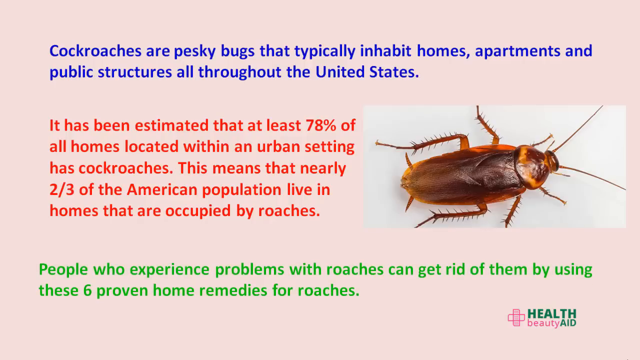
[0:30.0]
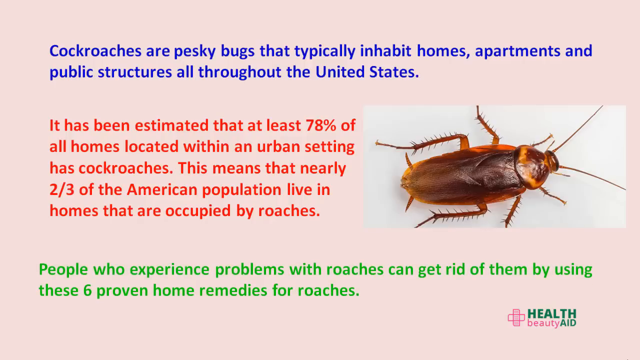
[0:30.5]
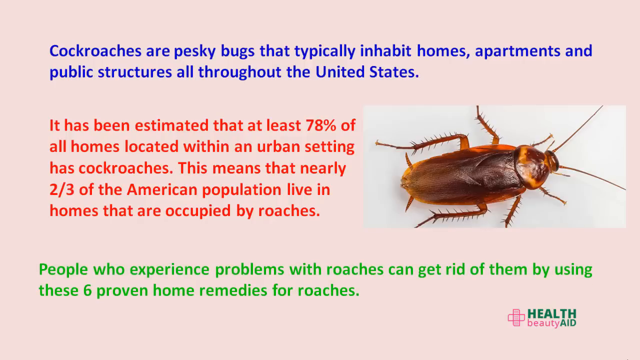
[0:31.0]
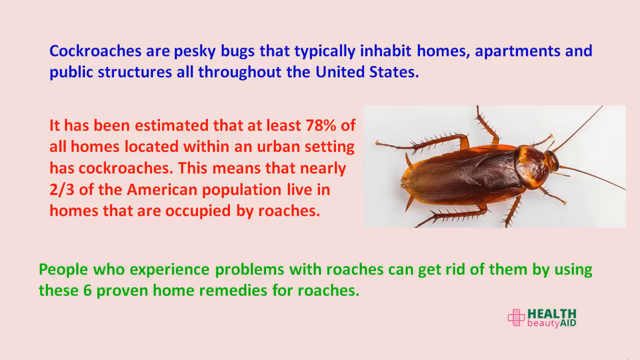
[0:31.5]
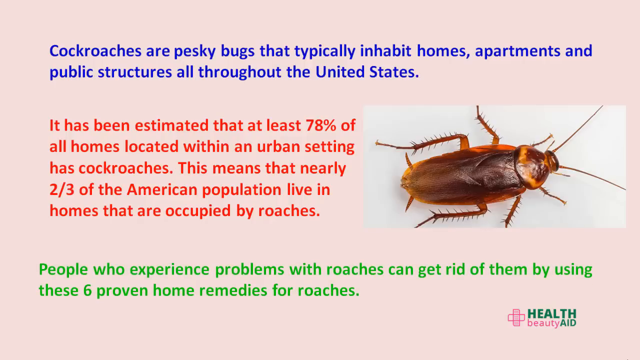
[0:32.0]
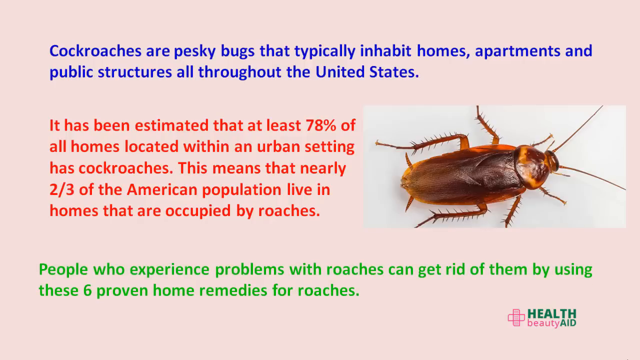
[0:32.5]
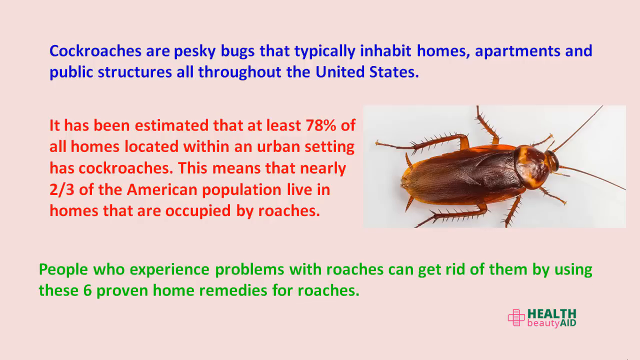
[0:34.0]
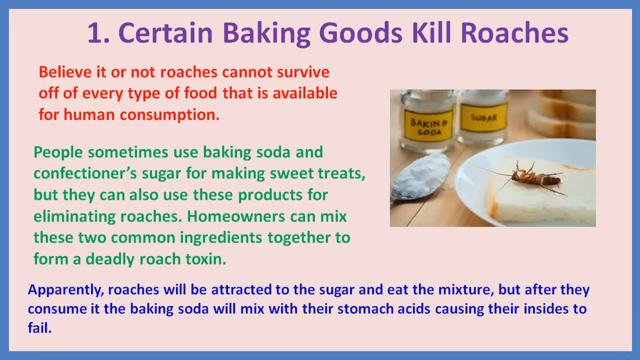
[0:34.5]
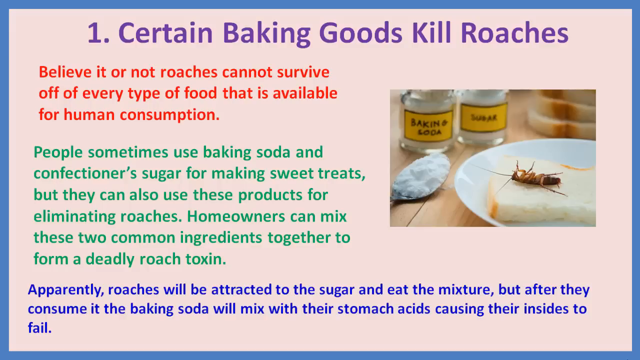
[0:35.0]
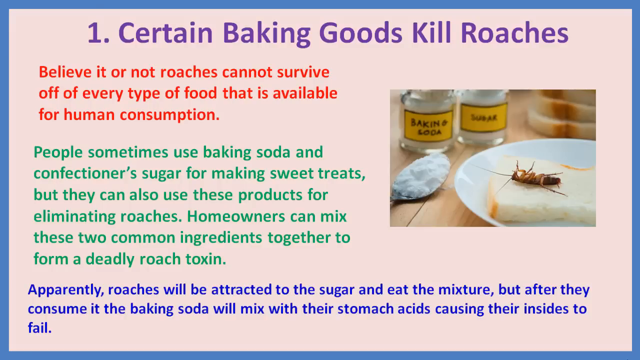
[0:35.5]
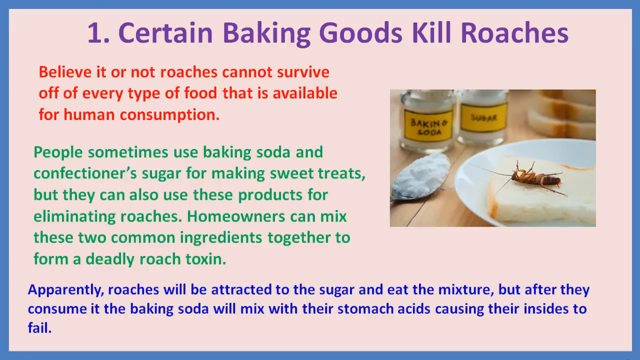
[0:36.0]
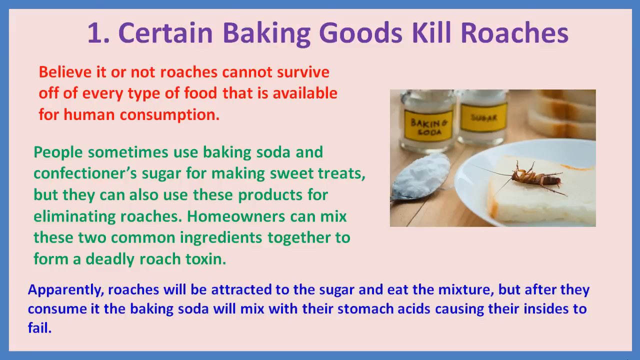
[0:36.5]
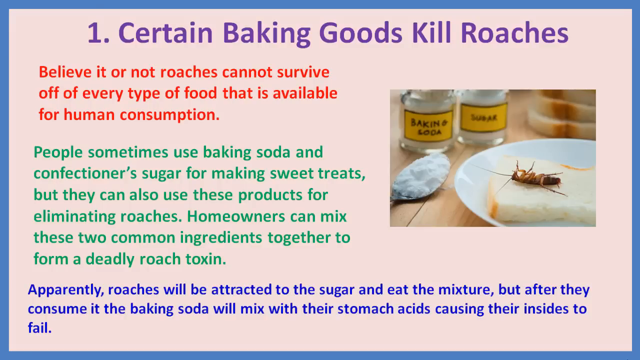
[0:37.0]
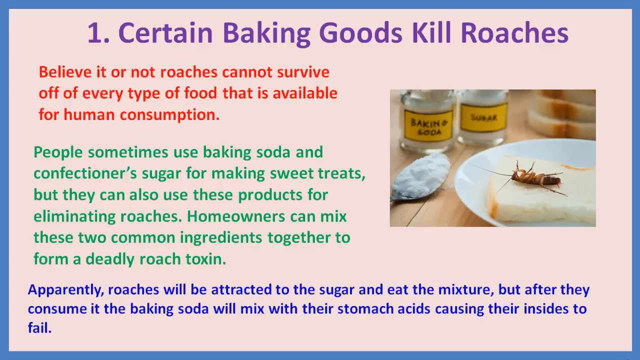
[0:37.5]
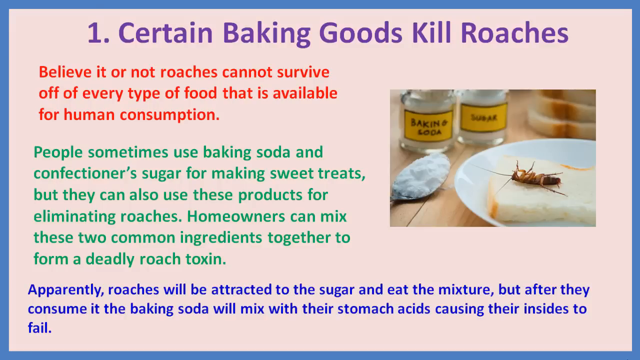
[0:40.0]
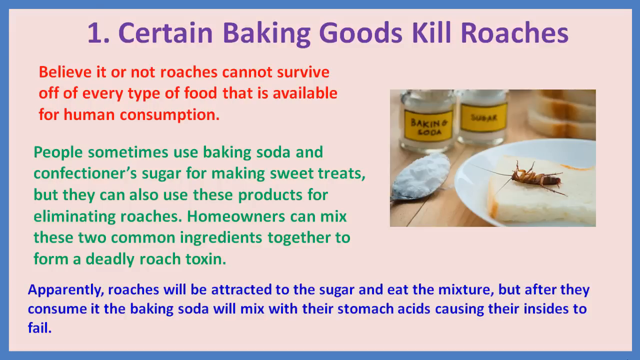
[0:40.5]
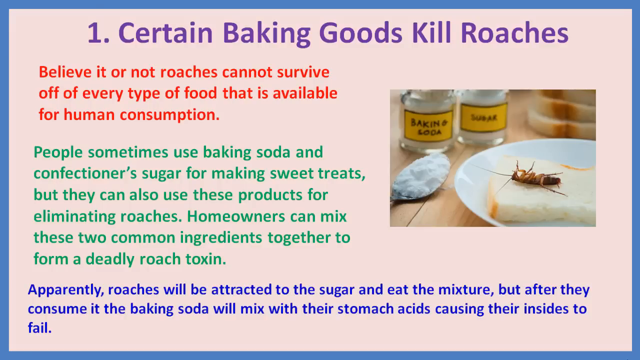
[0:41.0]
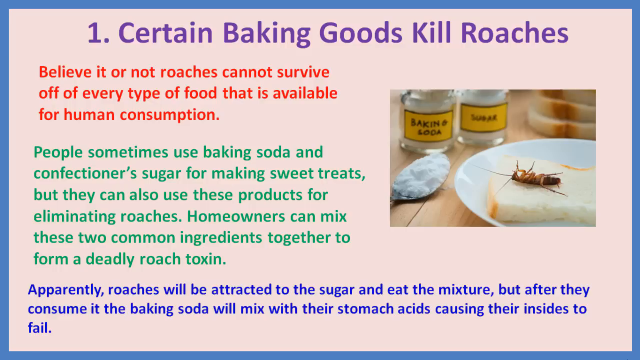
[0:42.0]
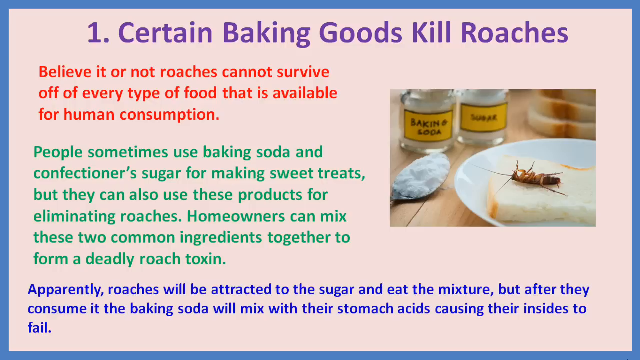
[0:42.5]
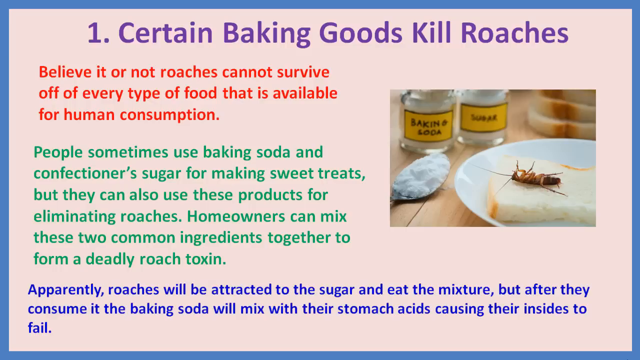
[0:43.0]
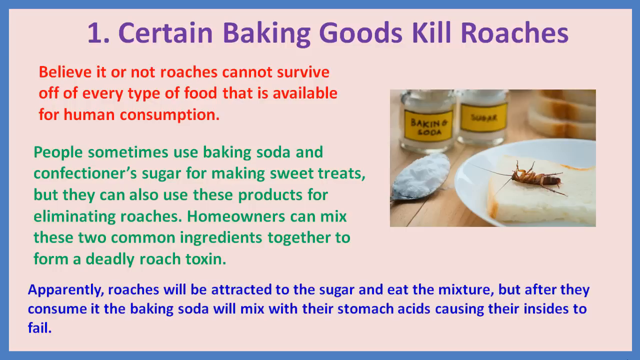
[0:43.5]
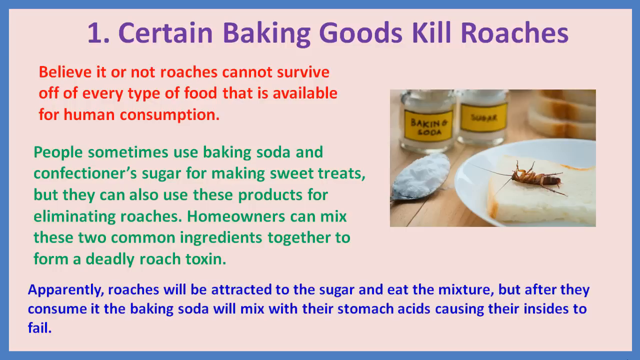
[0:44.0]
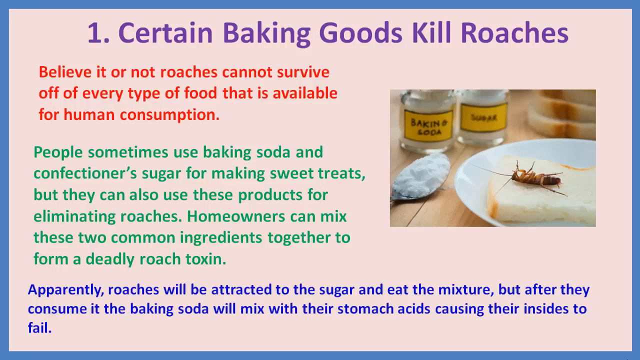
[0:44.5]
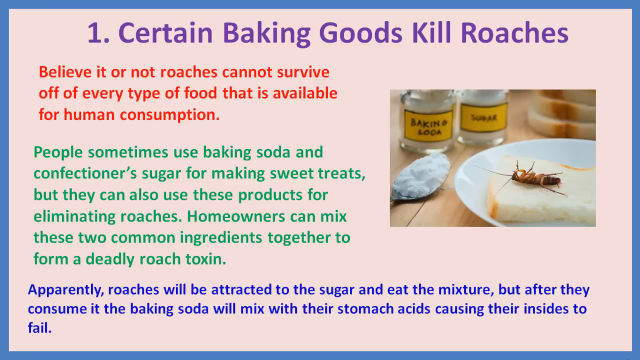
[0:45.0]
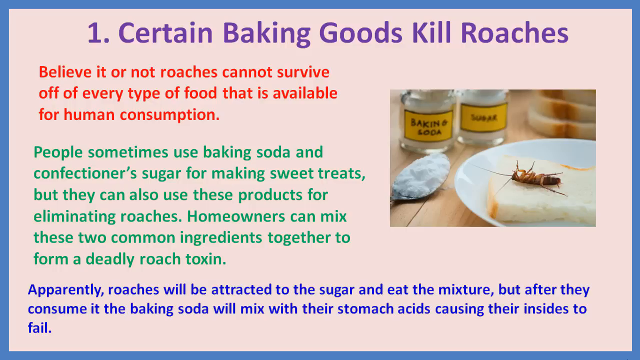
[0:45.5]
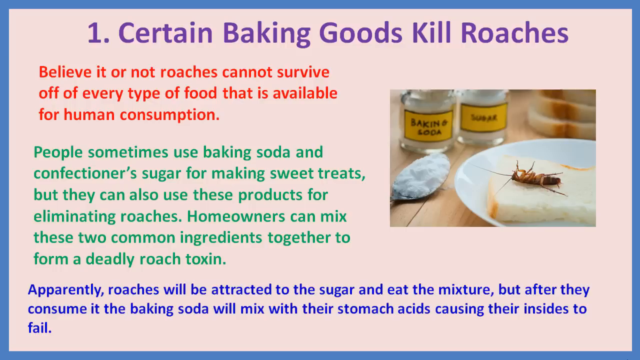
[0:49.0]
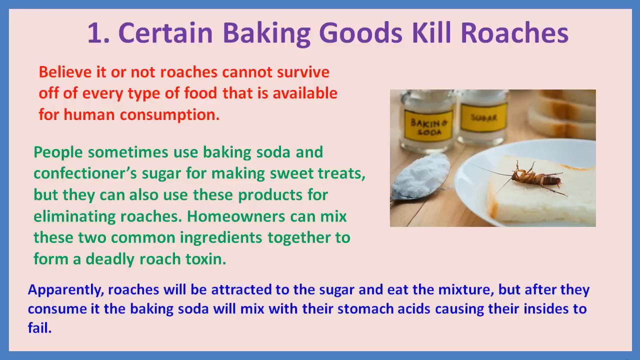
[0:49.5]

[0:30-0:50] Against a light pink background, blue lettering at the top reads "cockroaches are pesky bugs that typically inhibit homes, apartments and public structures all throughout the United States." Orange lettering below says "it has been estimated that at least 78% of all homes located within an urban setting has cockroaches. This means that nearly two-thirds of the American population live in homes that are occupied by roaches." Green lettering below that says "people who experience problems with roaches can get rid of them by using these six proven home remedies for roaches." At the bottom right, green lettering says "health," pink lettering below says "beauty," and green lettering beside that reads "aid." To the left is a pink cross shaped like band-aids. Above that, on an off-white background, is an orange cockroach with tentacles and little spiky legs. The next scene has a blue frame and a light pink background. Purple lettering at the top reads "one, certain baking goods kill roaches." Below, orange lettering reads "believe it or not, roaches cannot survive off of every type of food that is available for human consumption." Green lettering below reads "people sometimes use baking soda and confectionary sugar for making sweet treats, but they can also use these products for eliminating roaches. Homeowners can mix these two common ingredients together to form a deadly roach toxin." Blue lettering below says "apparently, roaches will be attracted to the sugar and eat the mixture, but after they consume it, the baking soda will mix with their stomach acids, causing their insides to fail." At the top right is a picture of glass bottles with yellow labels and black lettering; the left one says "baking soda" and the right one says "sugar." A silver spoon with a white powdery substance on it is at the bottom, on a brown table. Behind it there seem to be three pieces of brown bread. Just to the bottom right is a white plate with a piece of white bread on top and a dead roach lying on it with its tentacles in the air.